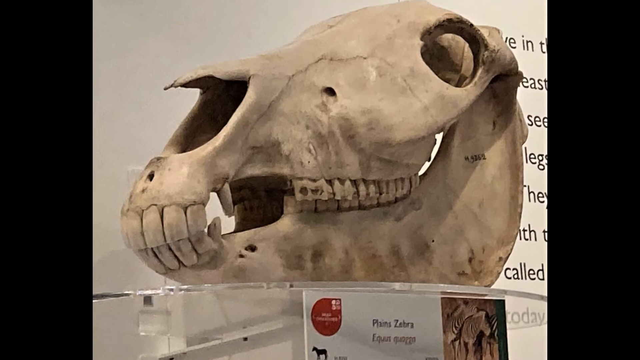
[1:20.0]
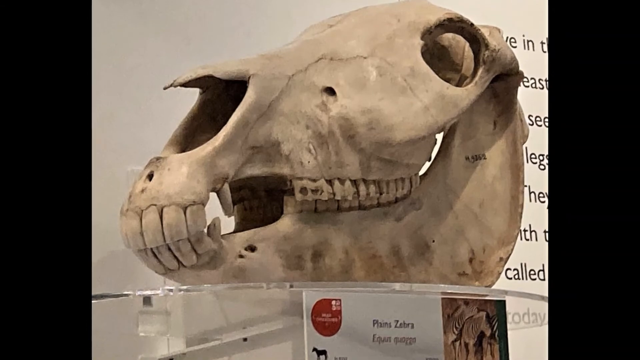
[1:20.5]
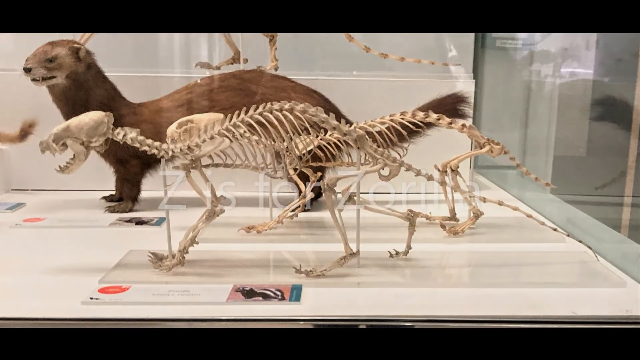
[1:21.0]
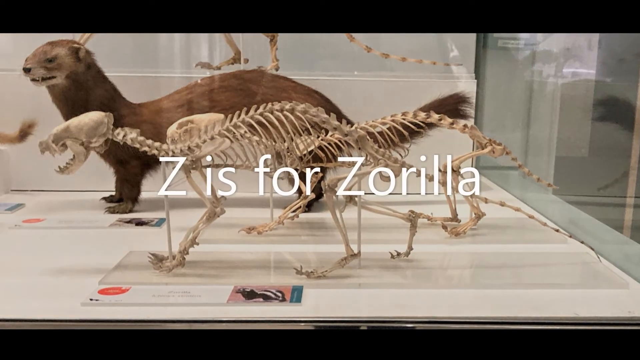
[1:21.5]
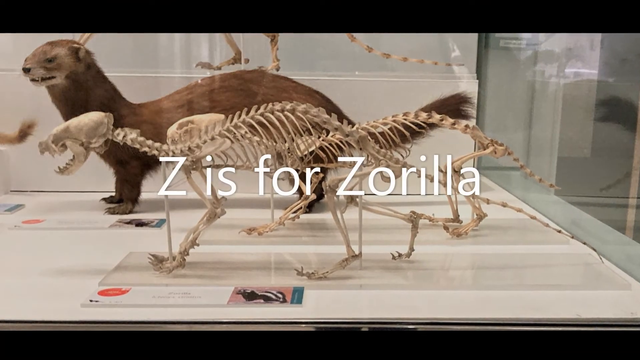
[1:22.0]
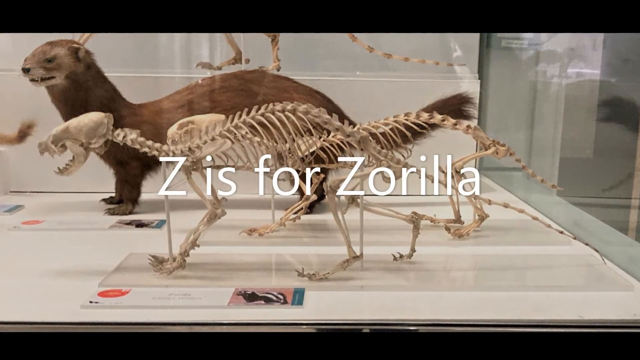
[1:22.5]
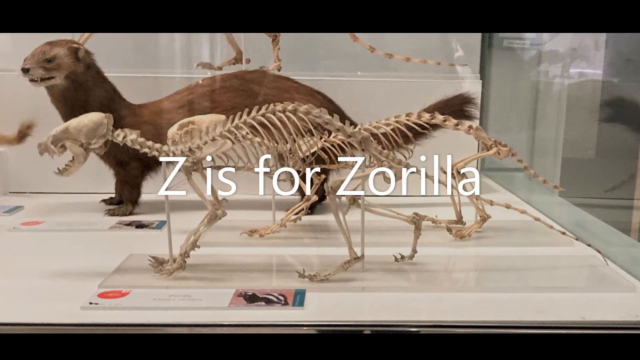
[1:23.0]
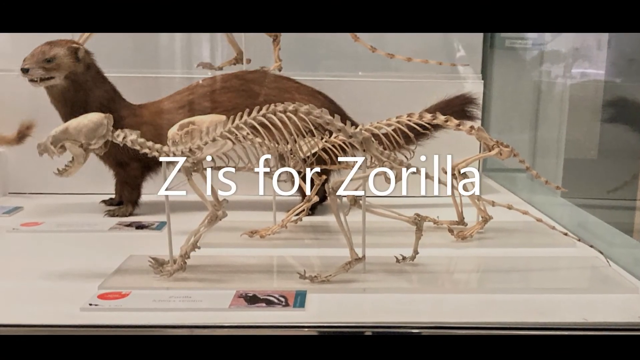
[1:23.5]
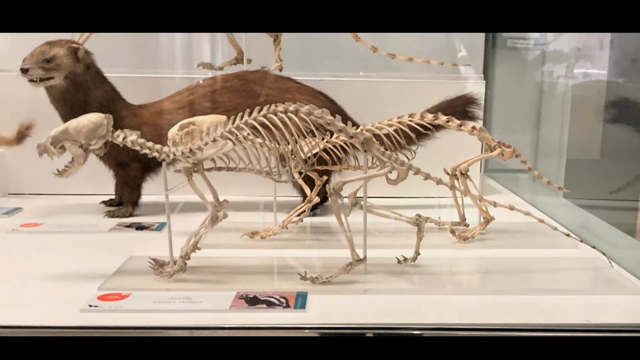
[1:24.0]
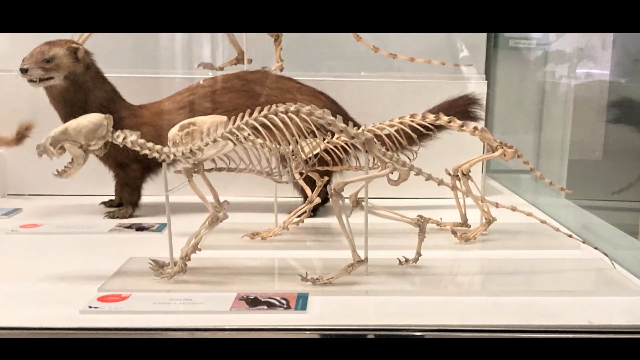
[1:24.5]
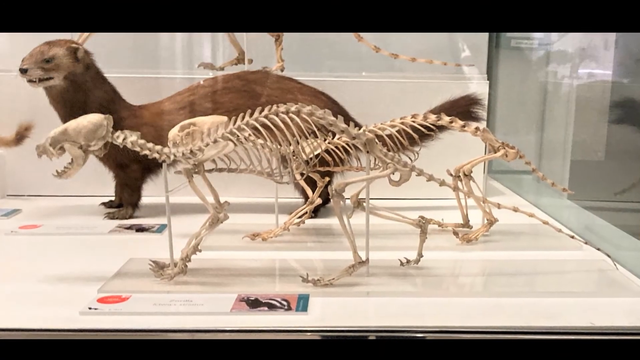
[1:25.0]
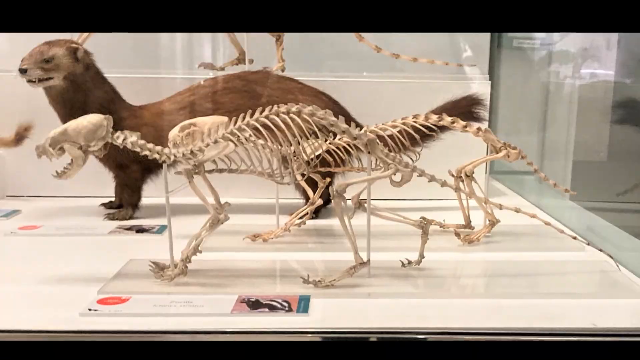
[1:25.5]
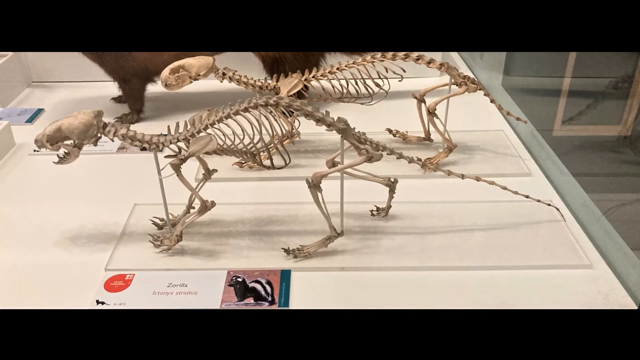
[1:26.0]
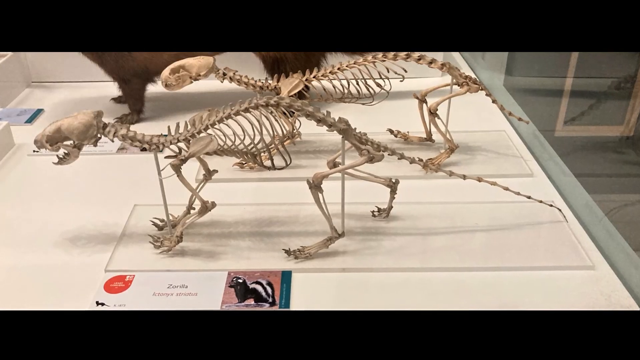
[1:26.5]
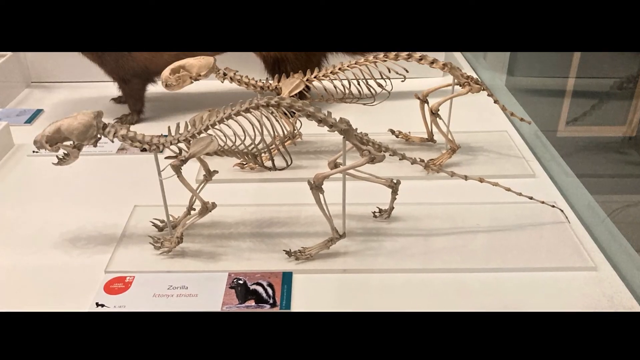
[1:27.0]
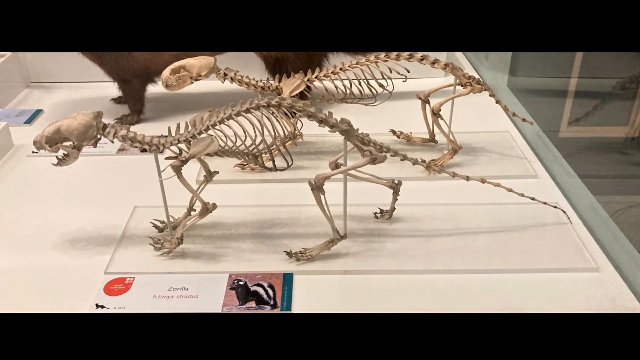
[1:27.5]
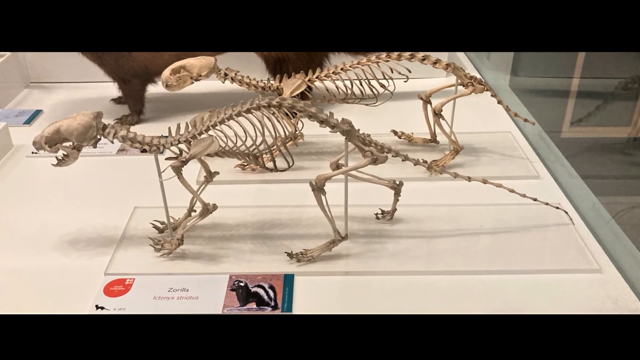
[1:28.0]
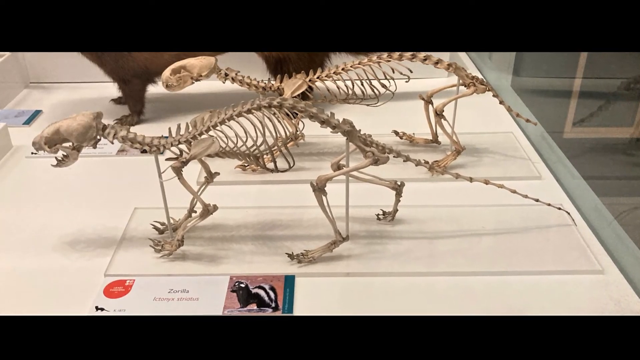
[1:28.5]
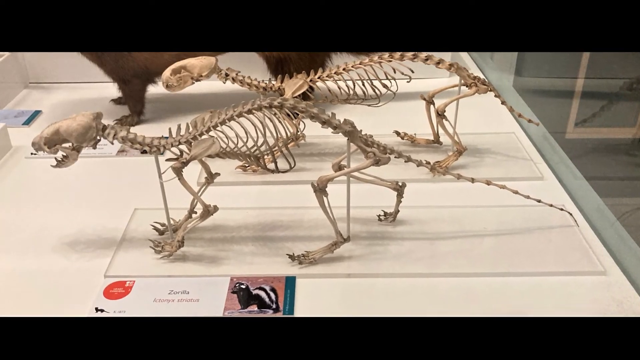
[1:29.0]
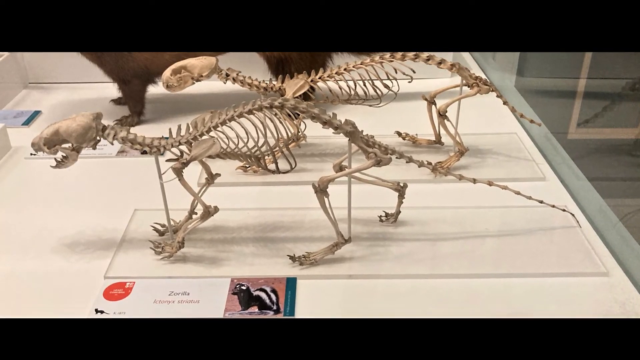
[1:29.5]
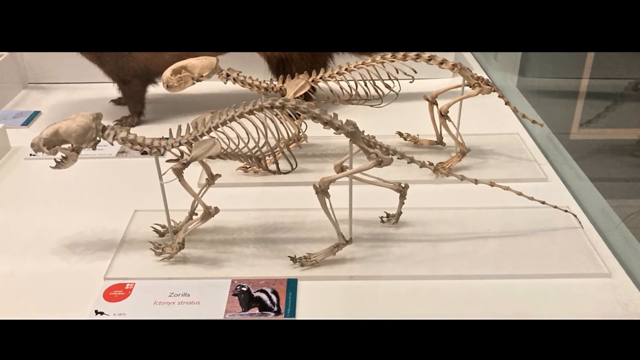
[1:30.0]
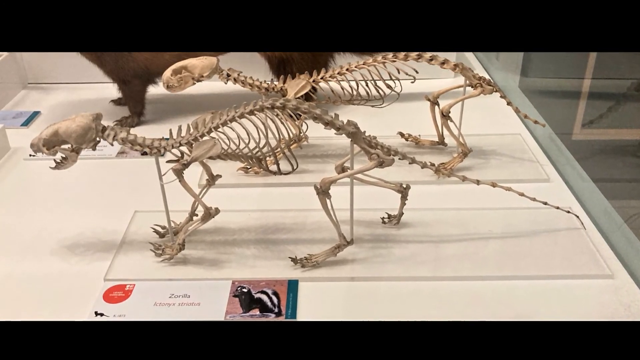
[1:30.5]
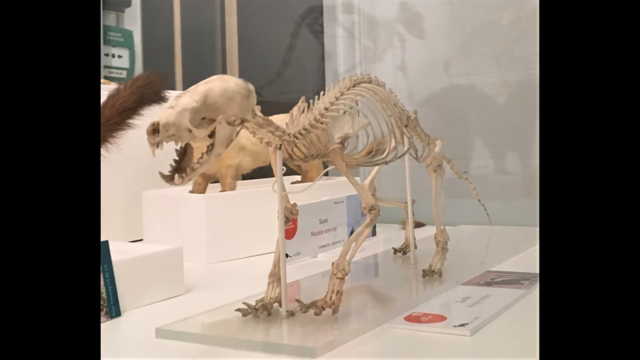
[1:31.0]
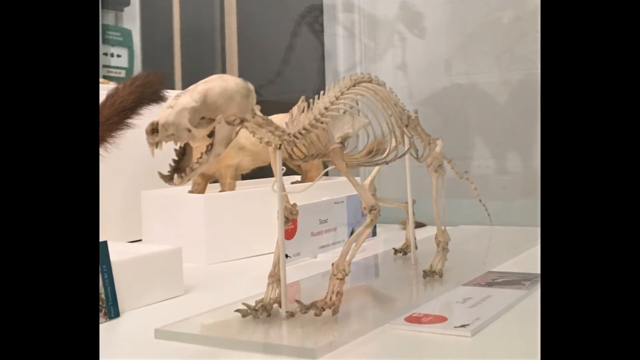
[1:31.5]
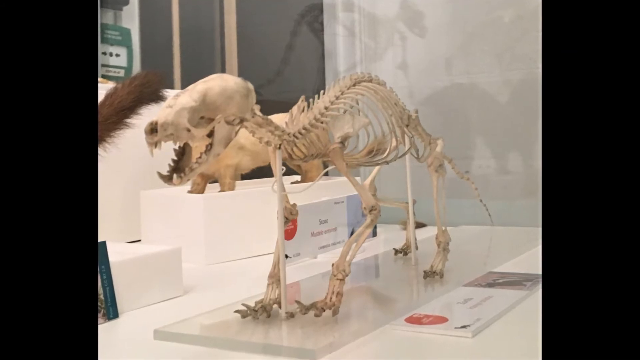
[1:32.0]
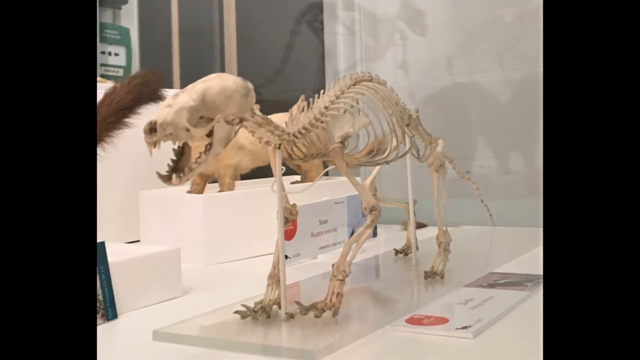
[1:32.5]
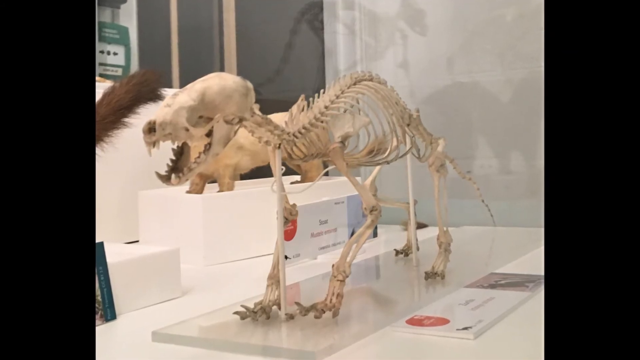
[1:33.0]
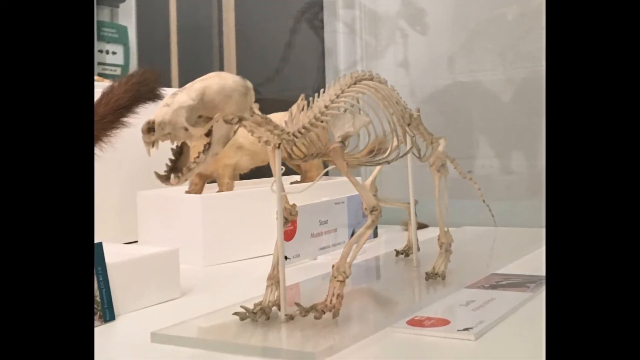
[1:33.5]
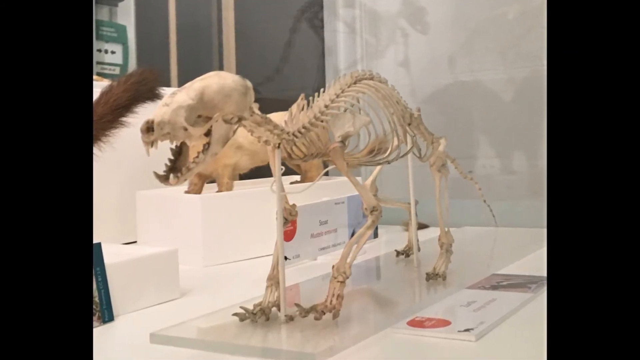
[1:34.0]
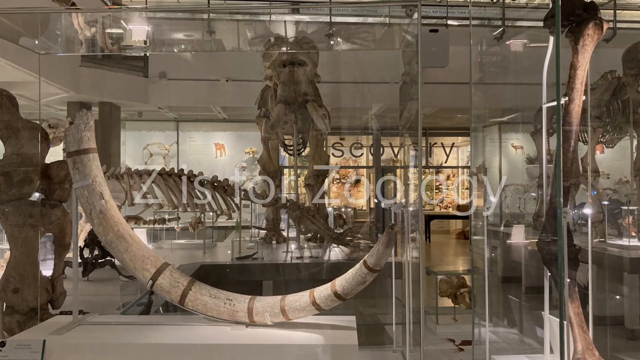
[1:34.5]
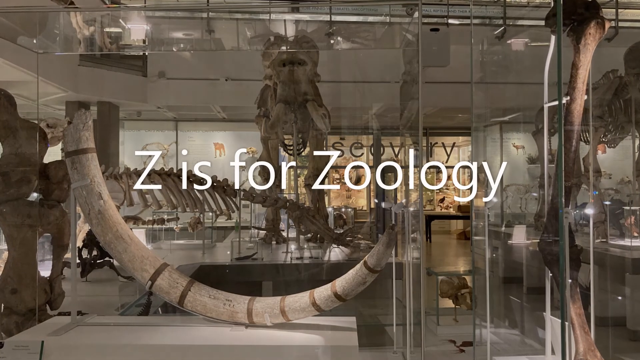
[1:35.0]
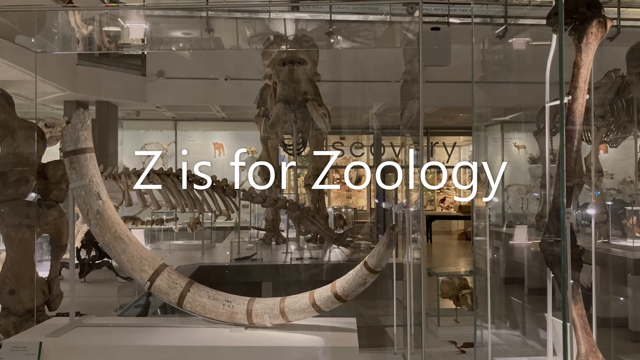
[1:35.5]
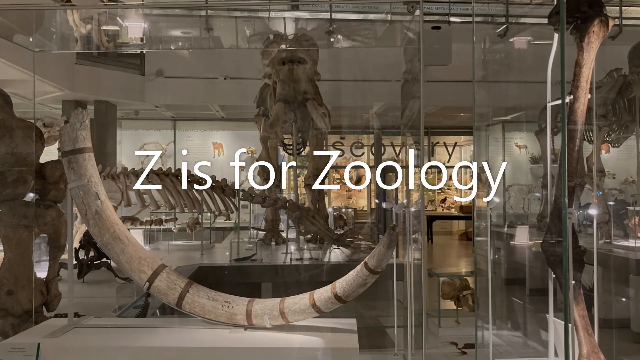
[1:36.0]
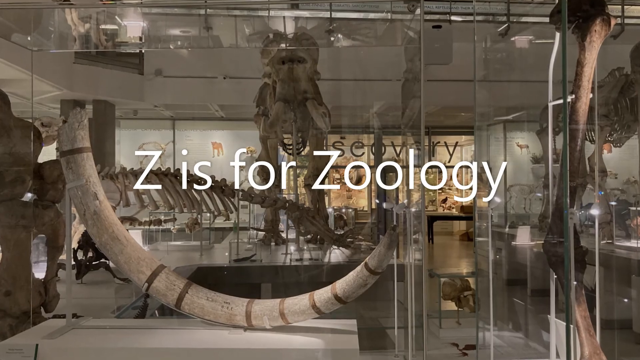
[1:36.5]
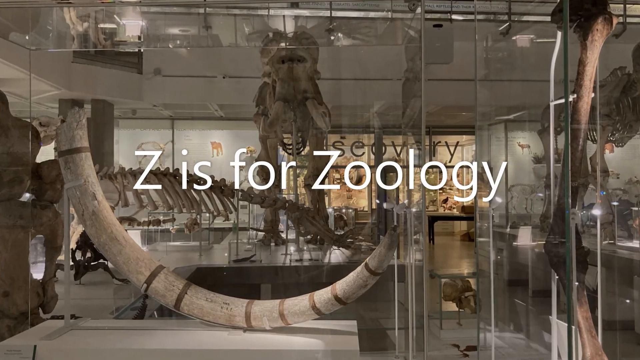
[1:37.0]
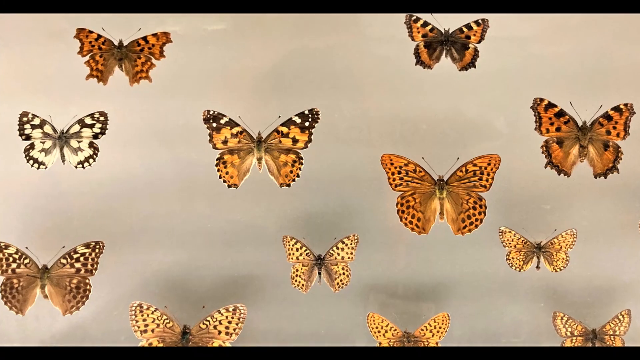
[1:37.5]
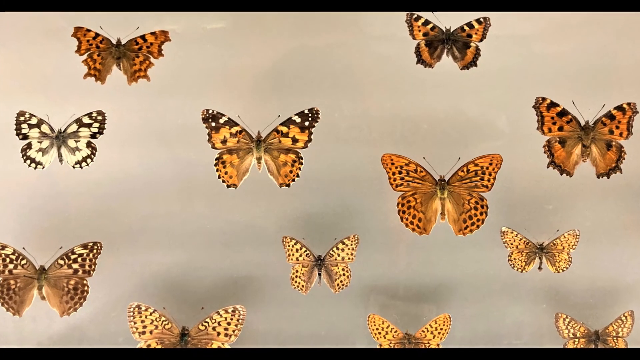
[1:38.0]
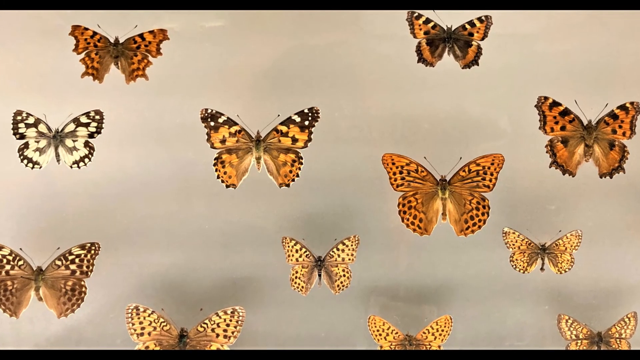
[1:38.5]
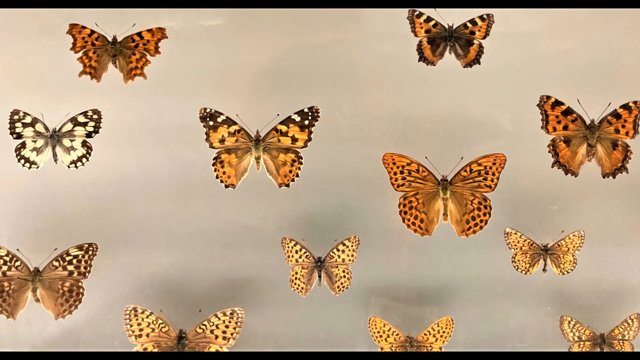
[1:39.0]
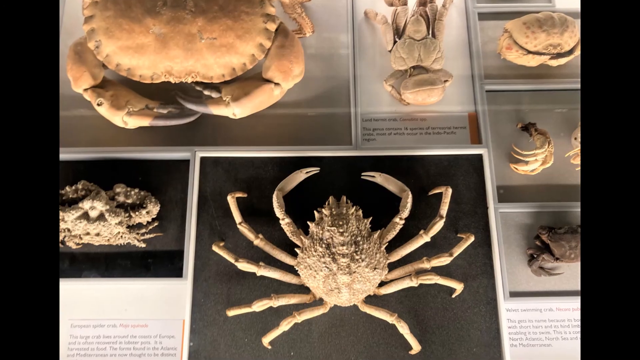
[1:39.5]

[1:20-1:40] A close-up shows the zebra's skull on the glass shelf. The next scene has the words "Z is for Zorilla" on screen and shows a zorilla skeleton; with fur on, it looks similar to a skunk but is not one. It has four legs, a small head and a curved spine. Then "Z is for Zoology" appears in white in the middle of the screen, and the words go away, revealing the museum's animals and skeletons, some hanging in the air and most behind glass for protection. The next screen shows 12 orange, white and black butterflies at different angles on a whitish background with slight shadows of the butterflies.